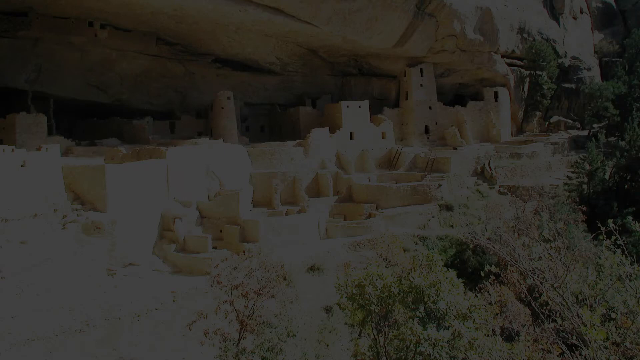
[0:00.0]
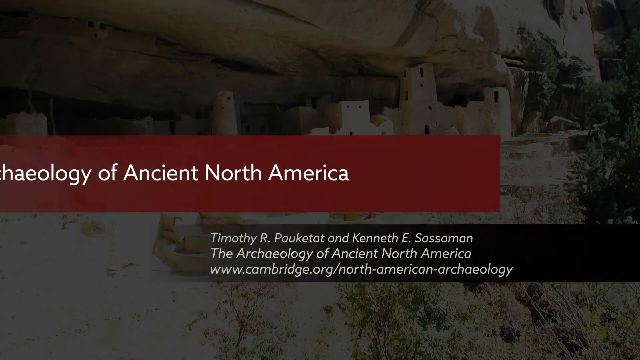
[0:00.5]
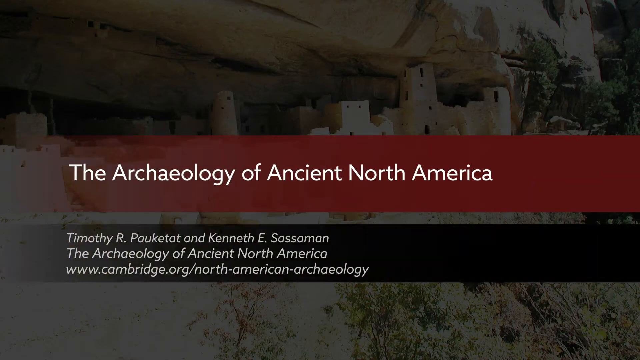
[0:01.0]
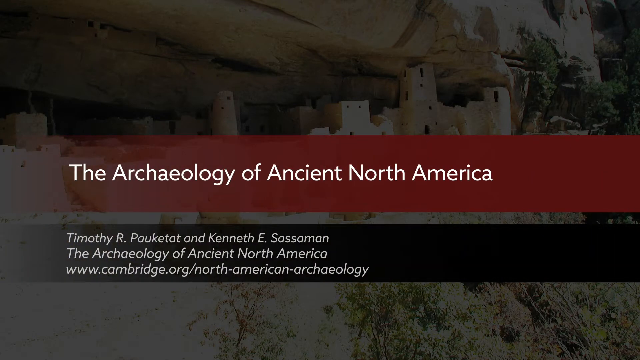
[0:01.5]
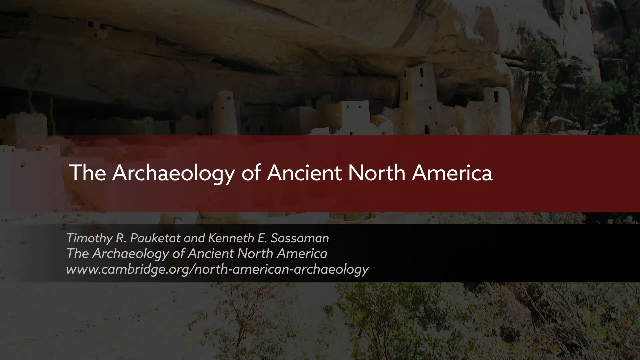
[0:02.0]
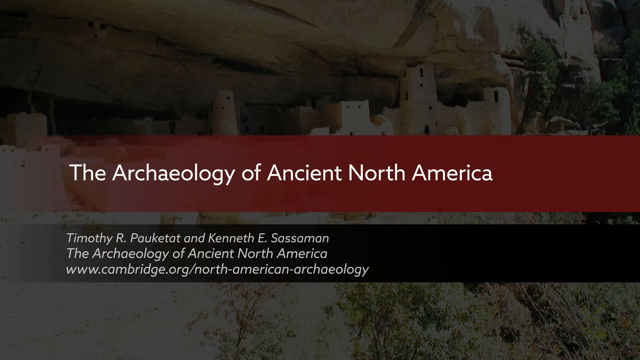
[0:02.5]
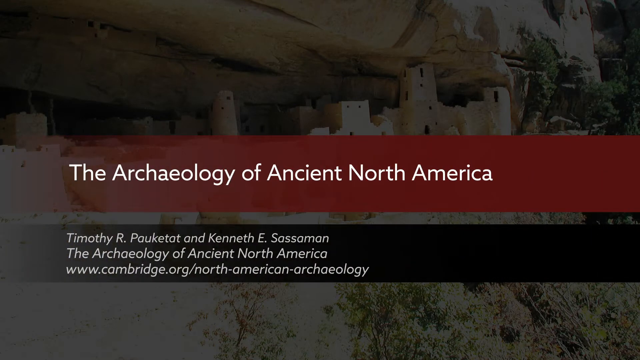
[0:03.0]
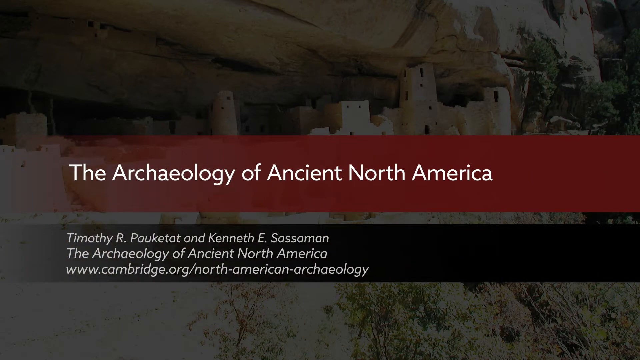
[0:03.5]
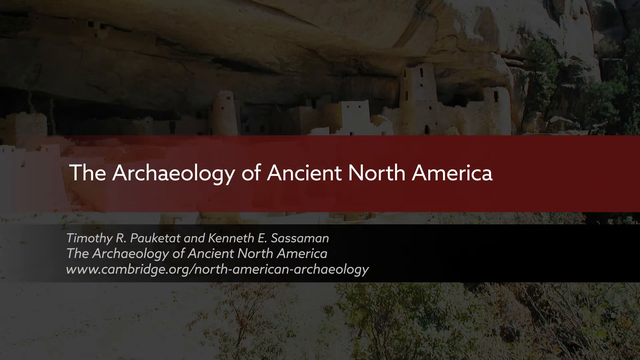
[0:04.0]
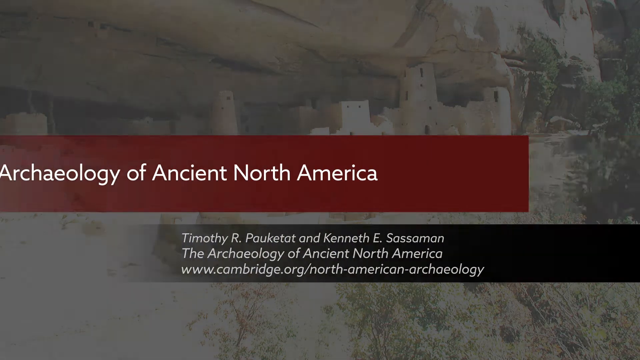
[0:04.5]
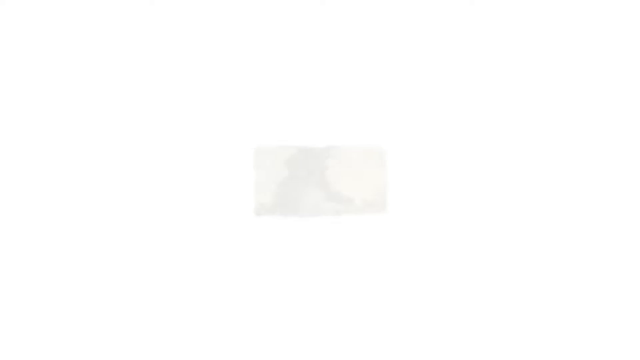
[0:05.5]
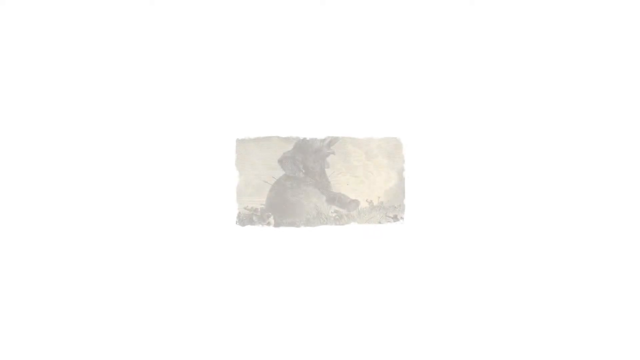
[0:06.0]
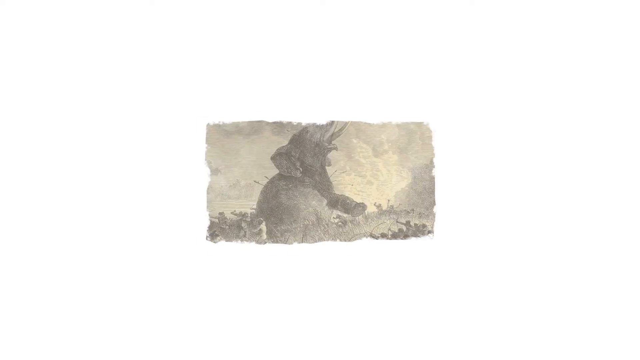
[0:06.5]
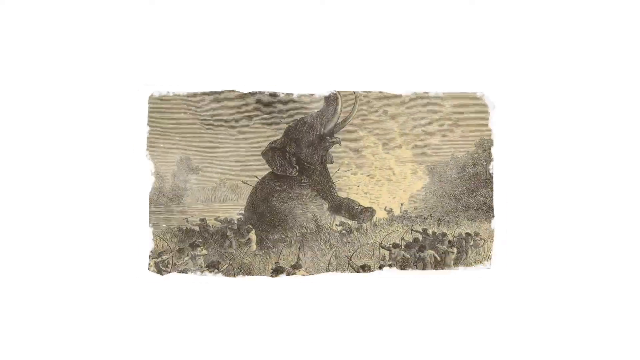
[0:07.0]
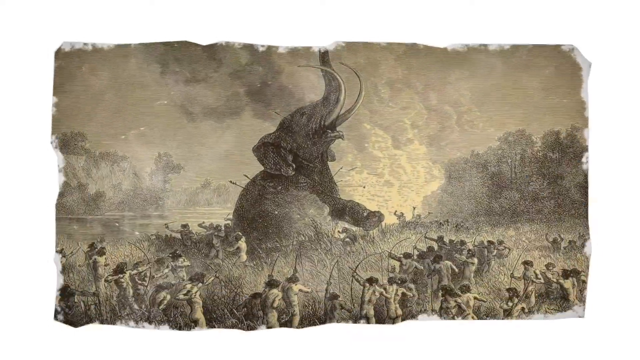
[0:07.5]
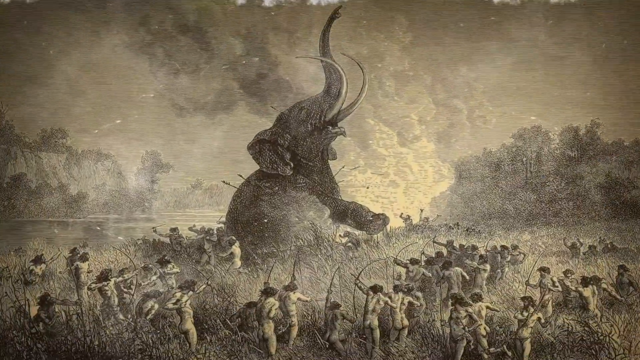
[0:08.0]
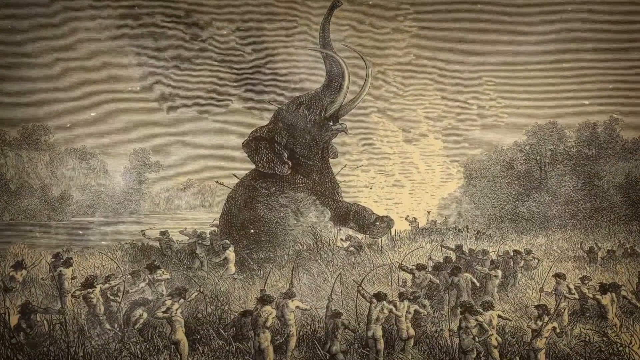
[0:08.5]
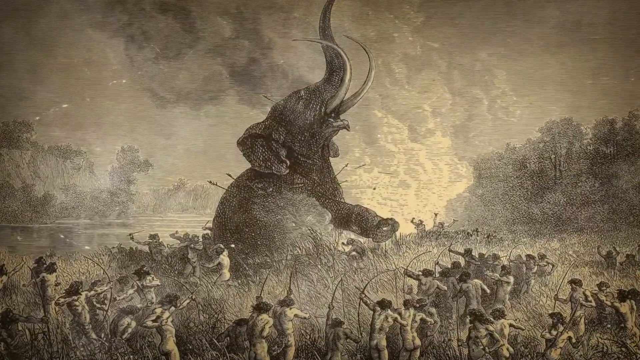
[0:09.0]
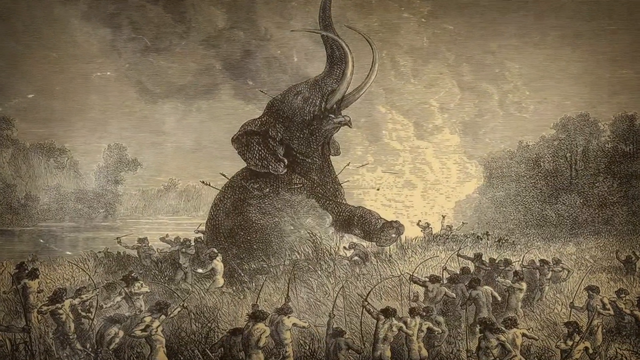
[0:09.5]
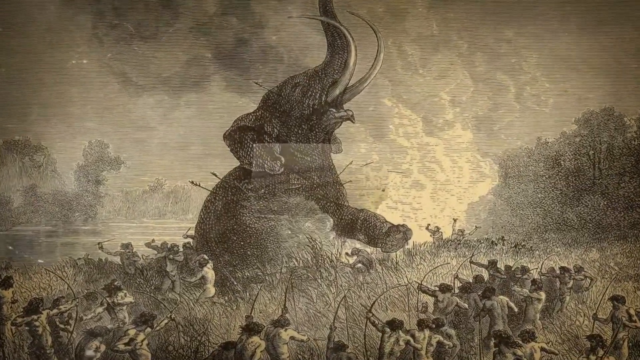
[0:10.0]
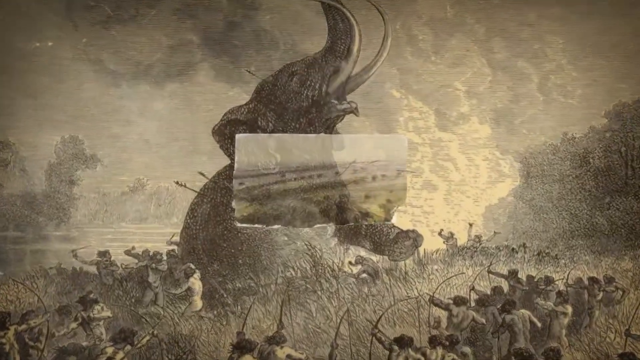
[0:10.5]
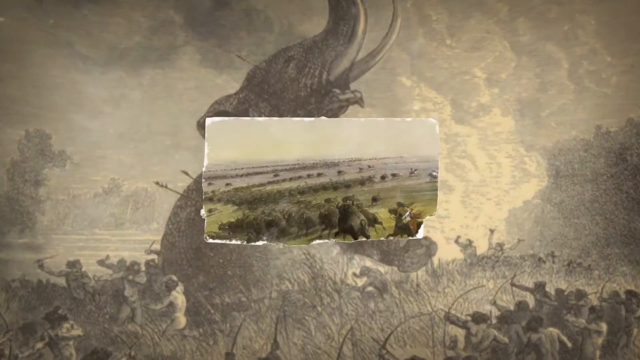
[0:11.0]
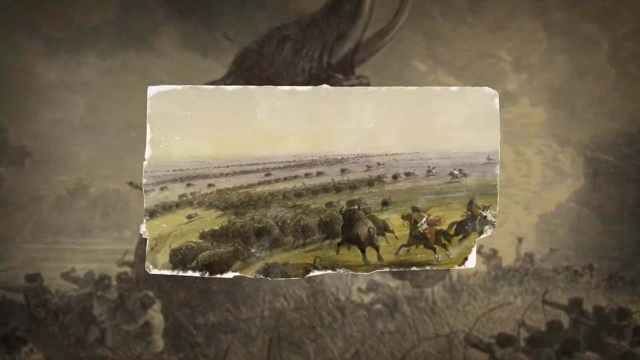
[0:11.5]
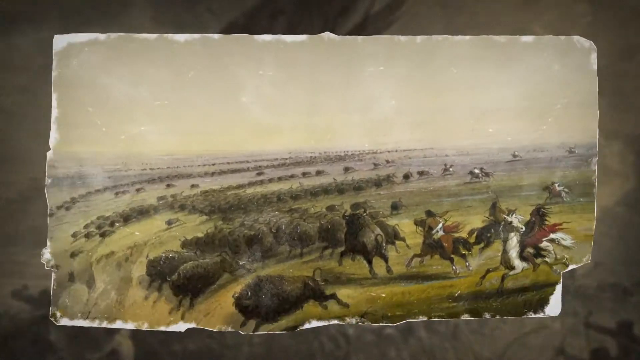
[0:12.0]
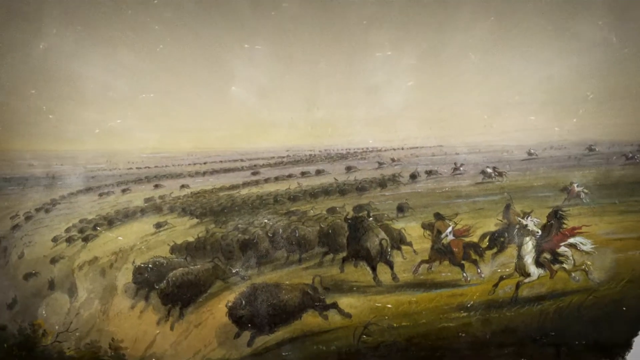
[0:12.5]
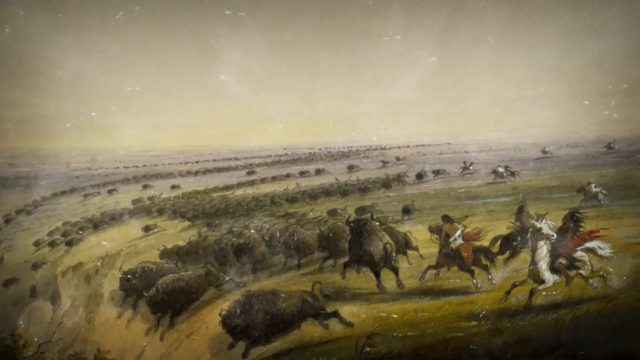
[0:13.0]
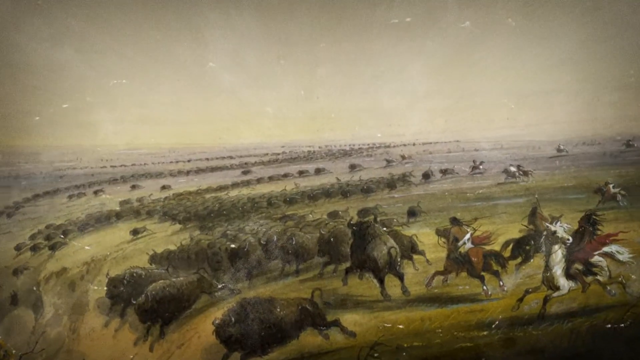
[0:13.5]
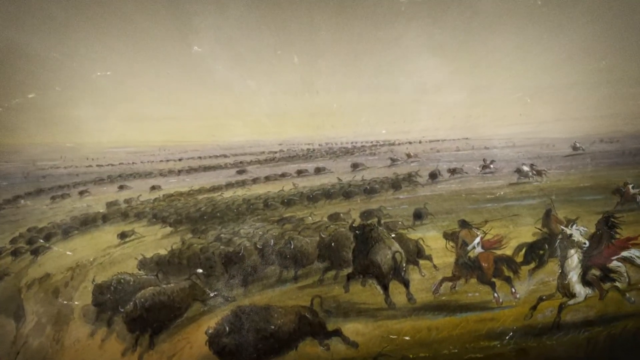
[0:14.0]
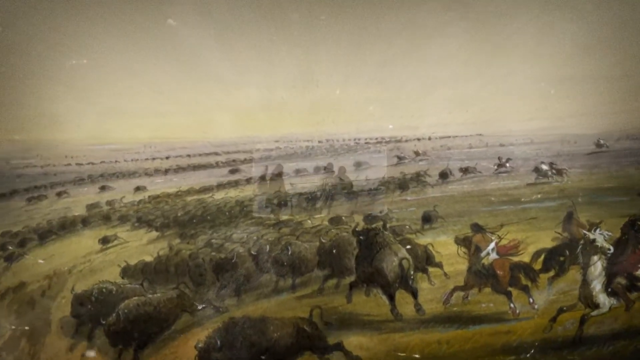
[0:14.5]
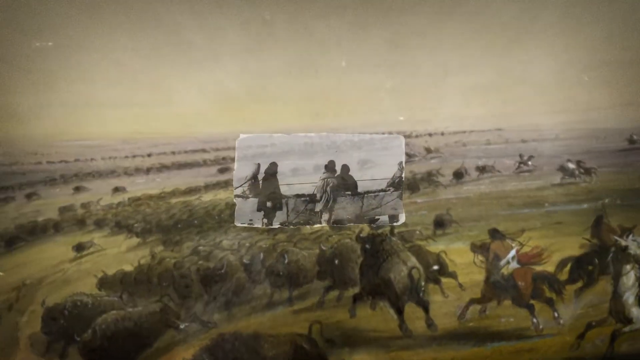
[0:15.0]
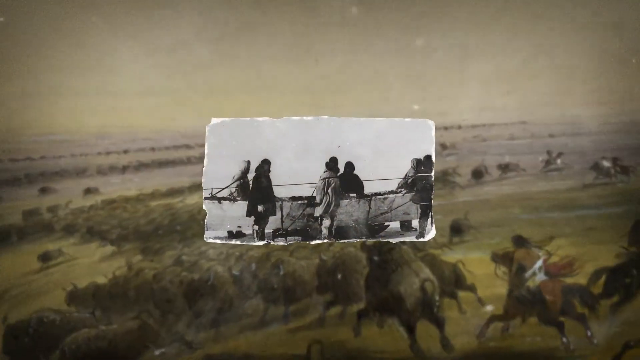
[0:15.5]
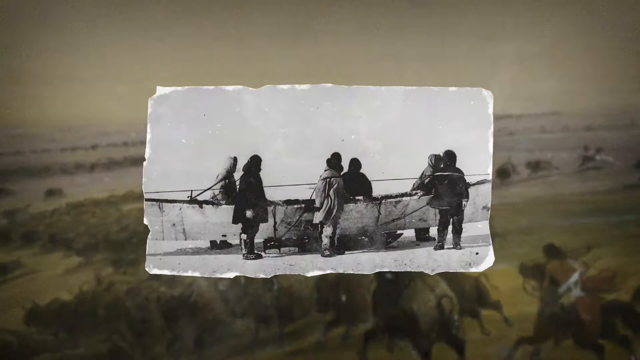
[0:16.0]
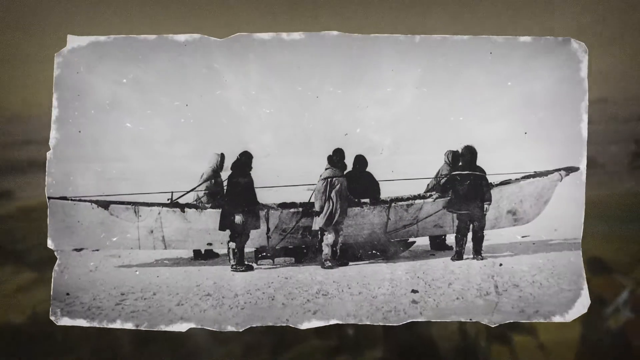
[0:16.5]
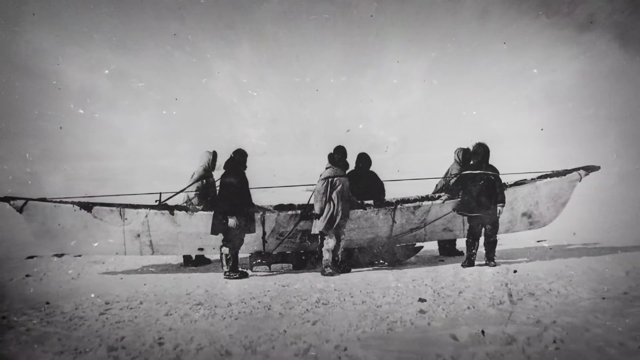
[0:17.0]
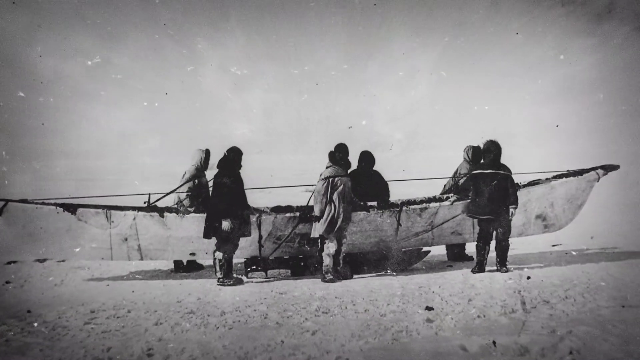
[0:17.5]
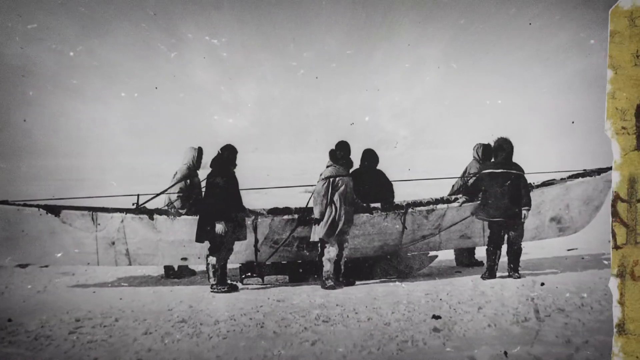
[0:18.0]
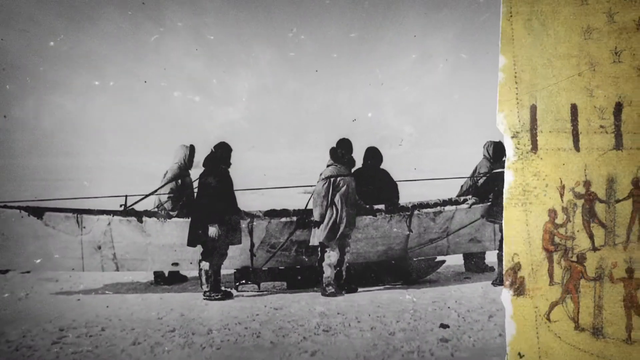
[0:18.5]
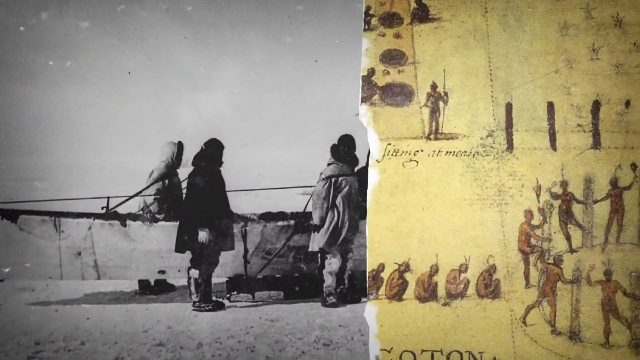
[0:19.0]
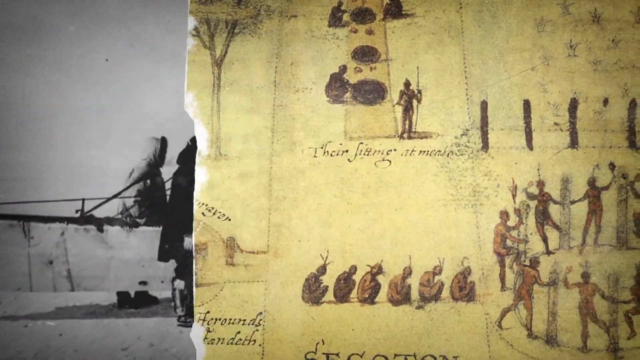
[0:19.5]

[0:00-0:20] The video opens on a very ancient village set into a rock face in the background, with a title and subtitles in the foreground. The title appears in a red horizontal banner across the middle of the screen and reads "The Archaeology of Ancient North America." Beneath it, a similar horizontal band, black with white text, identifies Timothy R. Pauketat and Kenneth E. Sassamon as the professors presenting it, and a URL below points to the University of Cambridge website and its North American Archaeology sub-site. The title stays on screen for a while, then the scene changes to an illustration of a large elephant raised up 20 or 30 feet above various hunters who have pierced its hide with arrows. The elephant is clearly in distress, with many arrows protruding from its thick skin. Other hunting scenes follow, including one of hunting mammals on the plain.